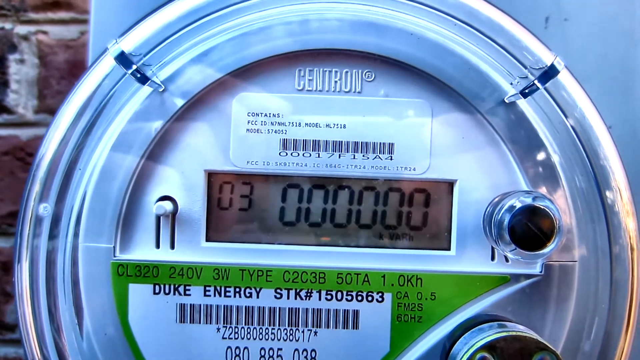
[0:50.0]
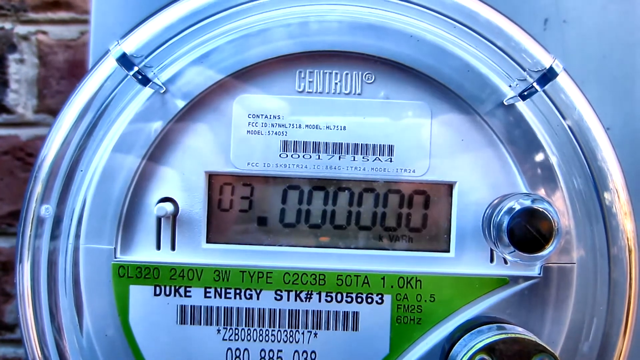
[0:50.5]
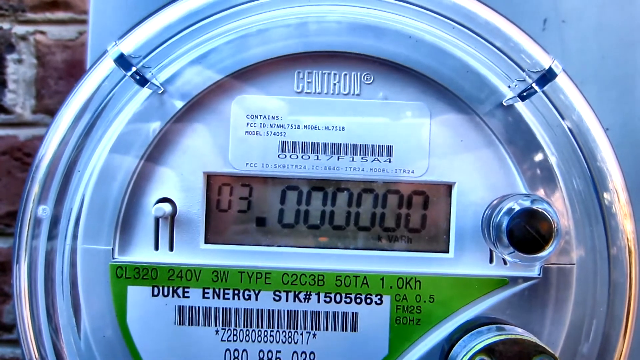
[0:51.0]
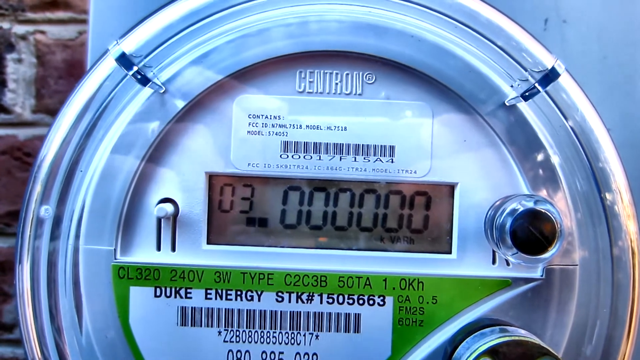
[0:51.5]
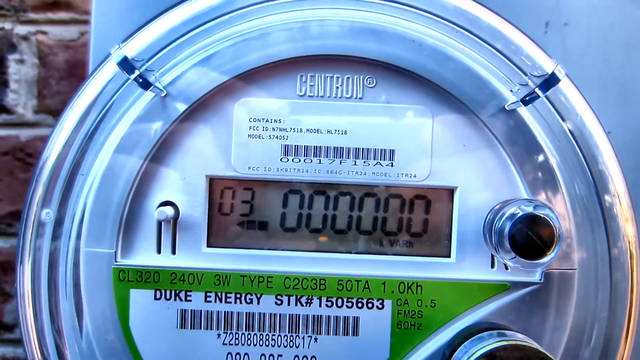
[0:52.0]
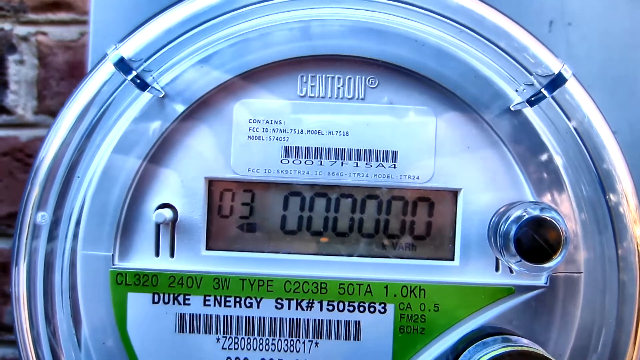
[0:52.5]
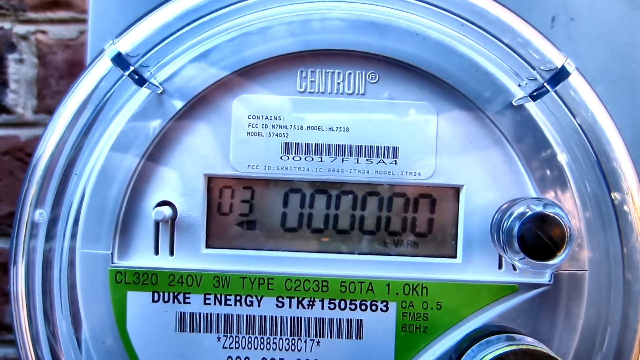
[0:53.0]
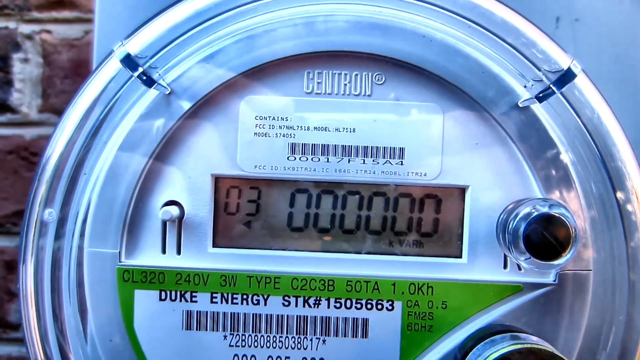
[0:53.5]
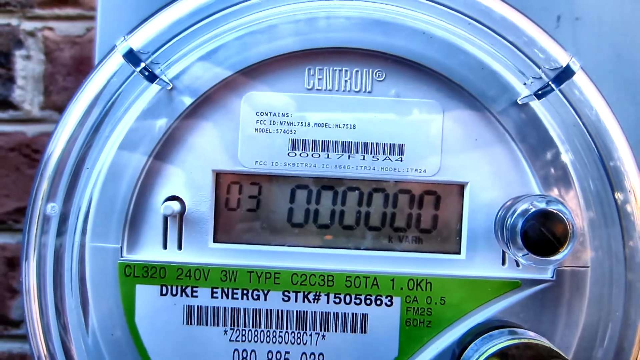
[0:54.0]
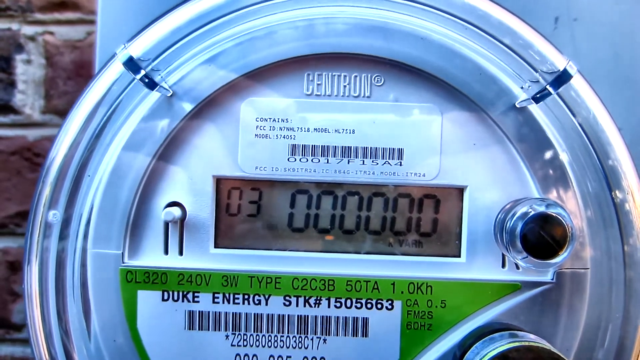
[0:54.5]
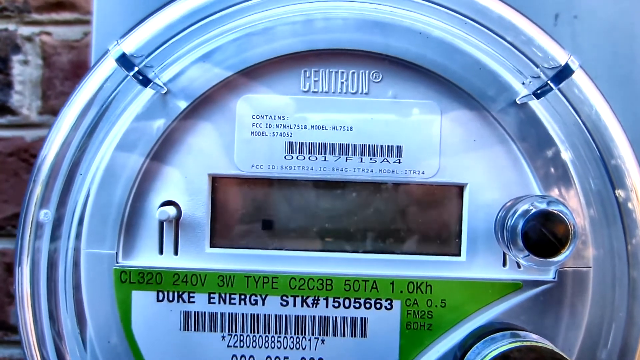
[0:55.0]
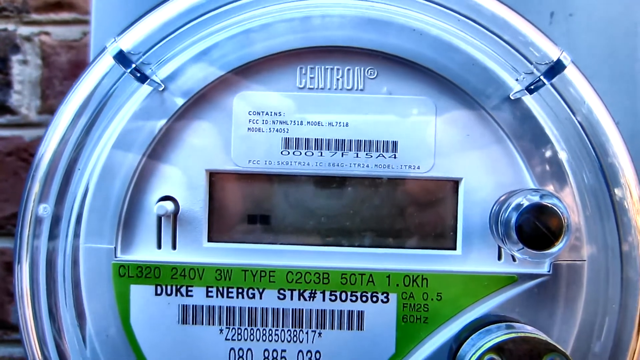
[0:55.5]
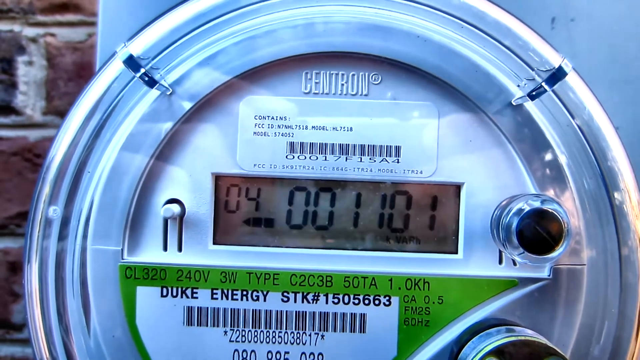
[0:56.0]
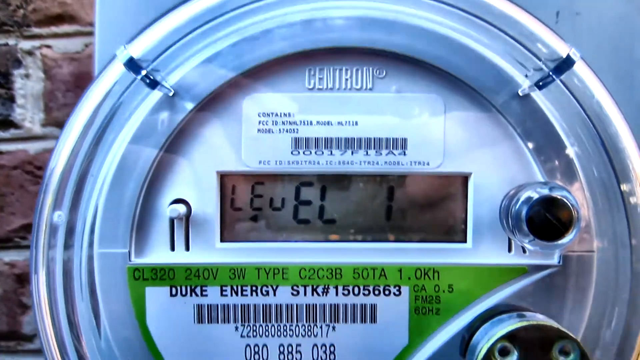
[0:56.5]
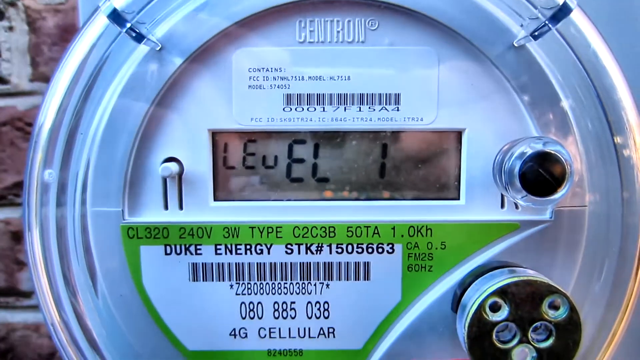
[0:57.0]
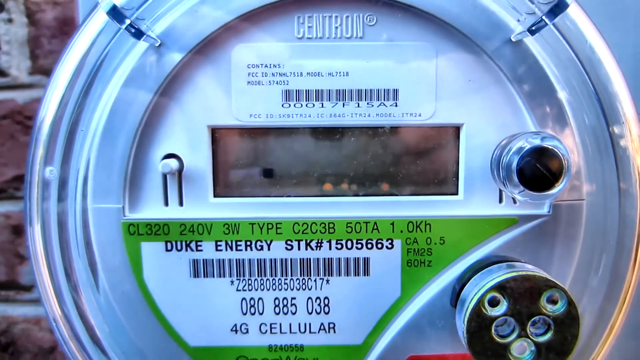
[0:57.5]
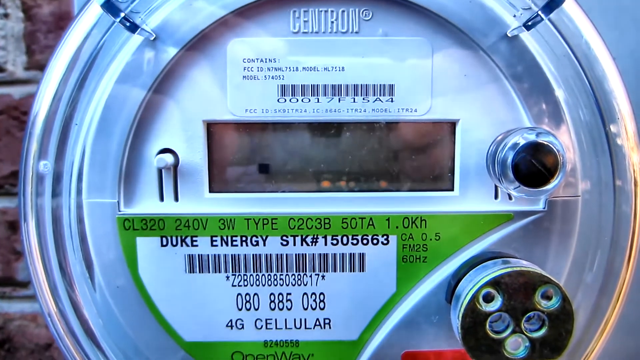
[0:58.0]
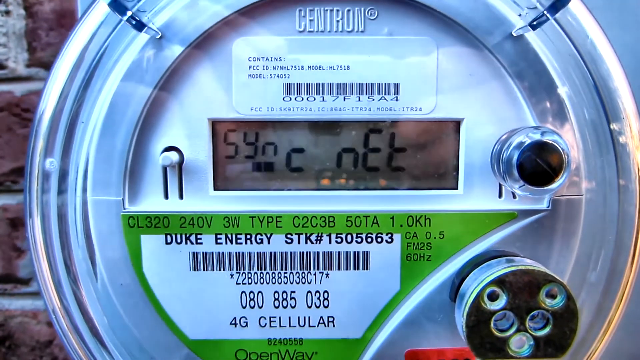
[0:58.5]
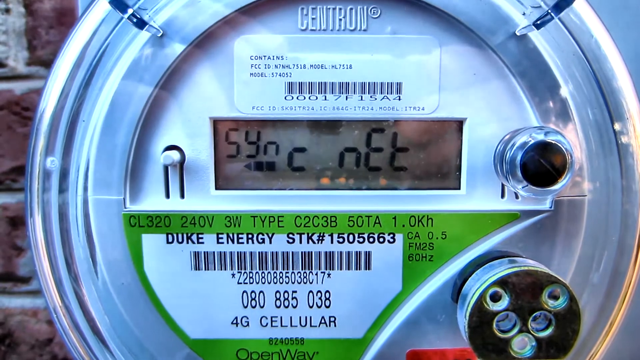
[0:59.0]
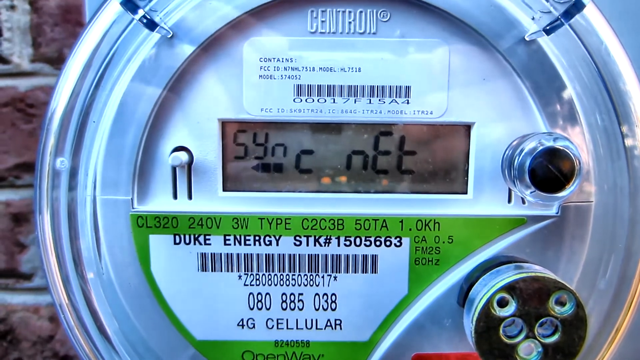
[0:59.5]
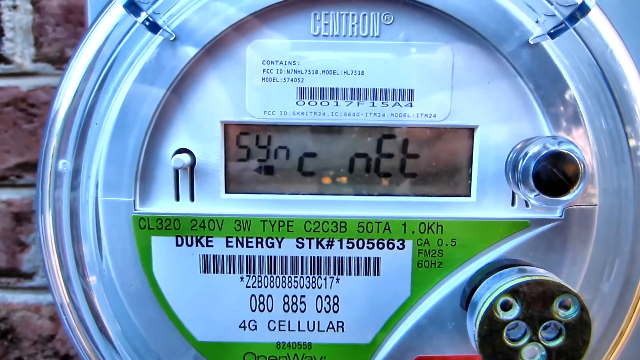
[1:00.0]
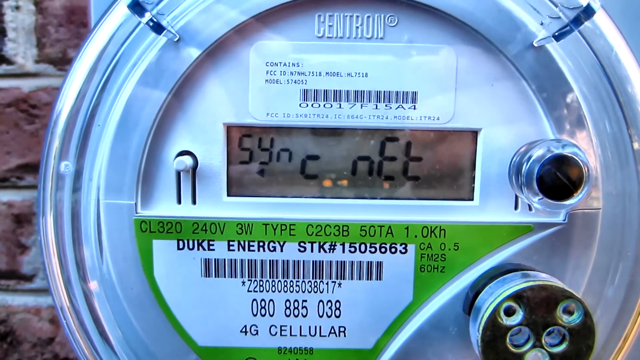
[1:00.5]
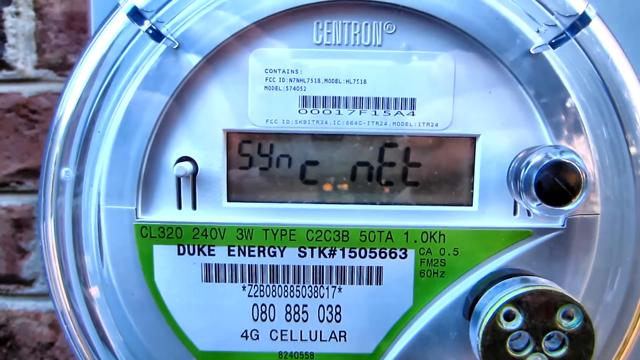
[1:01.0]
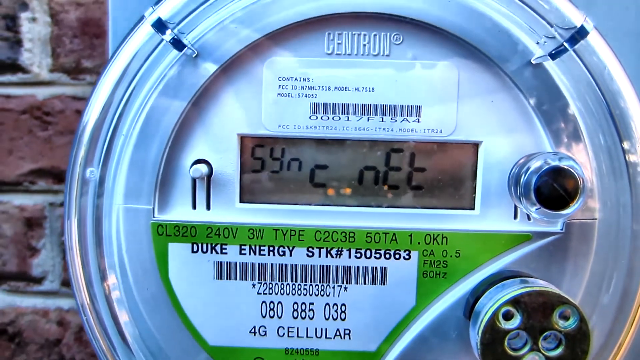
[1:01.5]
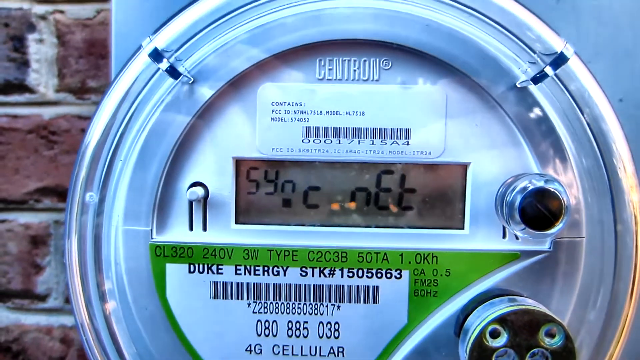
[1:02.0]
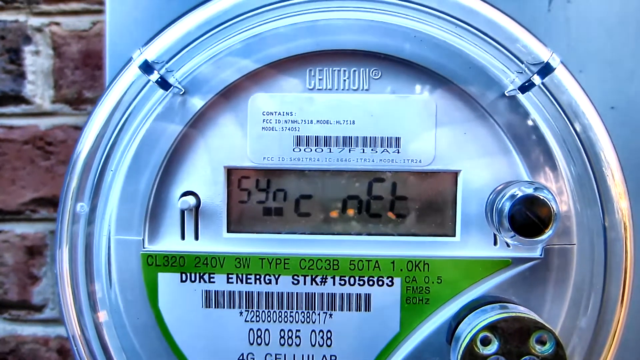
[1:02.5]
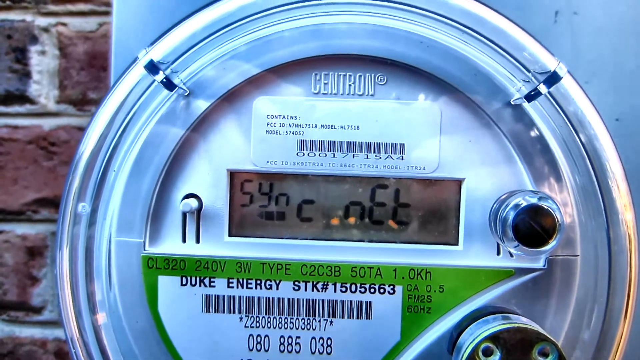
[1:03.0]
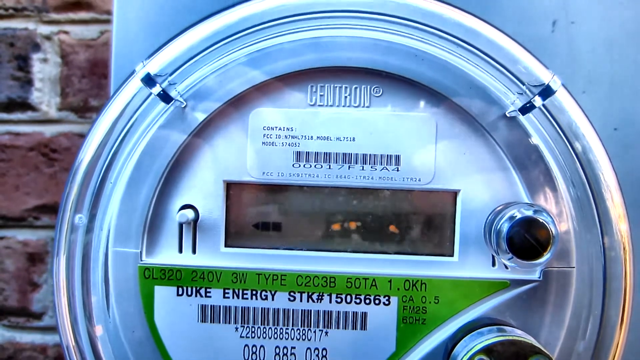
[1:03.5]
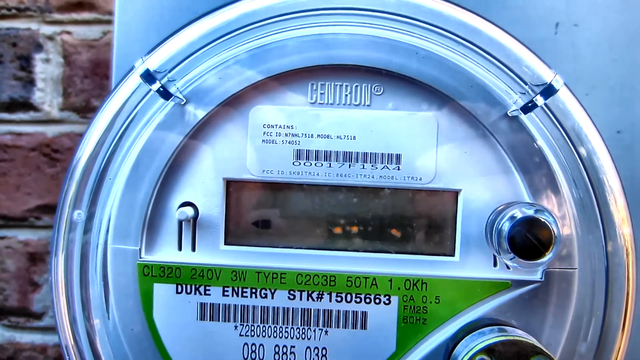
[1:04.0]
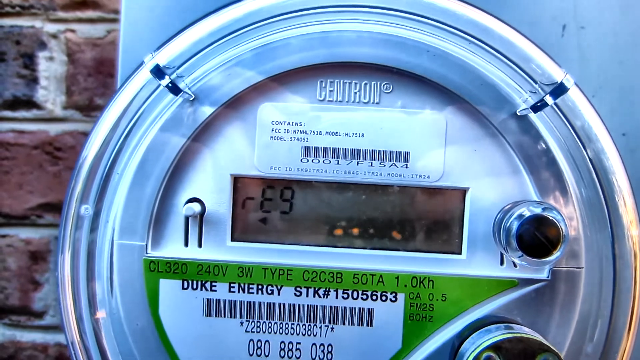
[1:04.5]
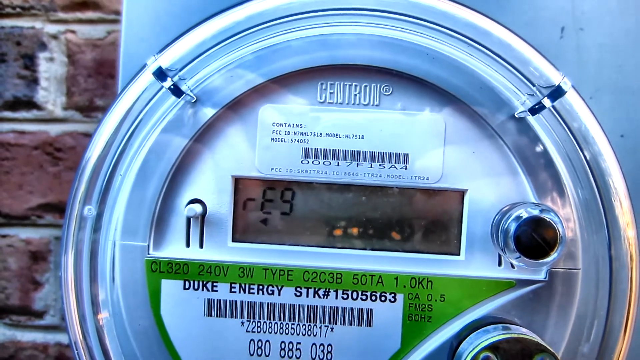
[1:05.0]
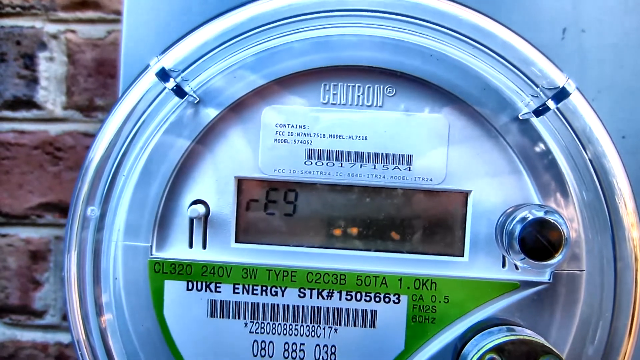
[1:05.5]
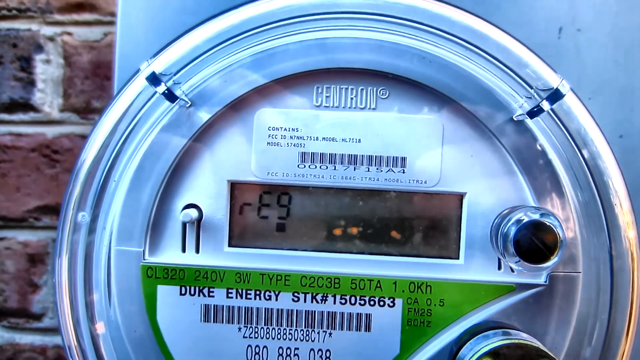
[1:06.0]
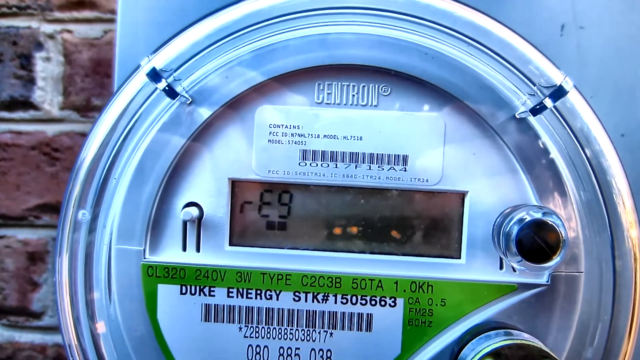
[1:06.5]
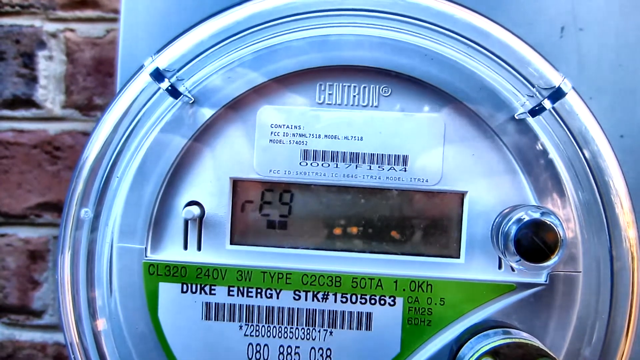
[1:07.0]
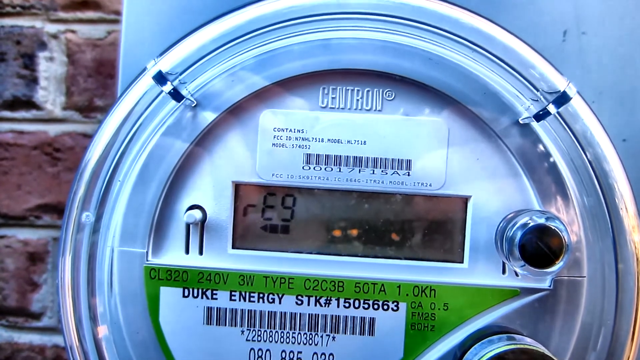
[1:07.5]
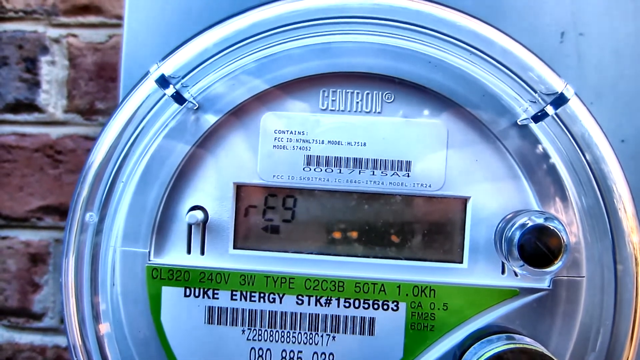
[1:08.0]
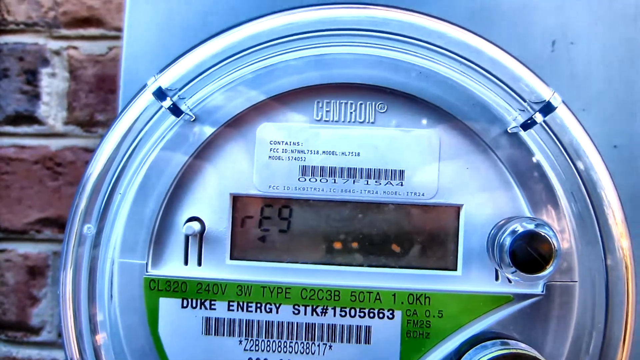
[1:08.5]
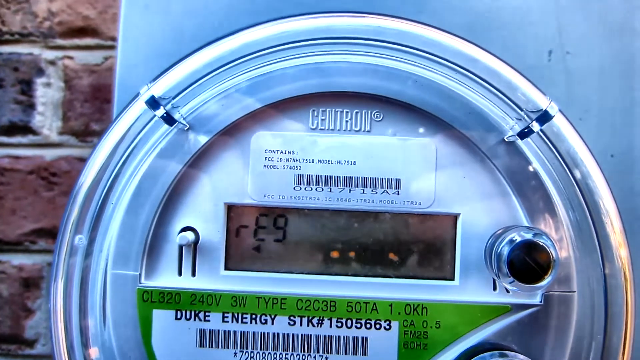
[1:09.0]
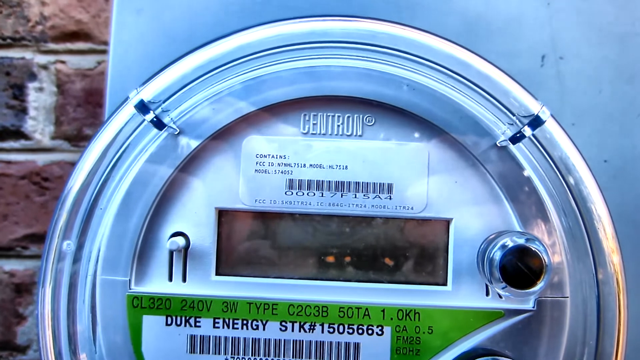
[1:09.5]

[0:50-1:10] The meter is a circle meter marked "CENTRON". At the bottom it says "Duke energy stk # 150 563", with a barcode underneath. Above that, in green, it says "CL 320" and "240 V", along with "3W", "type C2C3B" and "50 TA". Above that is a long rectangle showing numbers like those on a stopwatch, currently all zeros; in the left-hand corner it says "03", followed by six zeros. The display then changes from the six zeros to characters that make no sense, goes blank, and then appears to say "level" and then "sink", all in a weird kind of lettering.